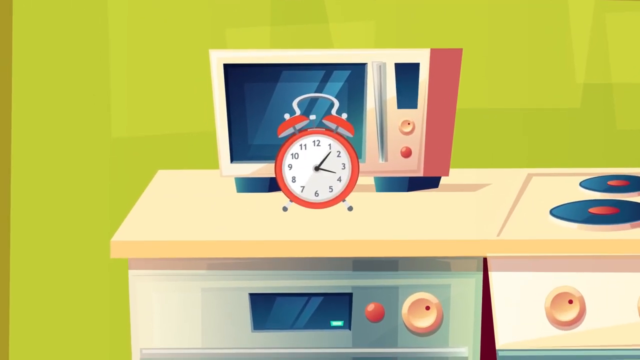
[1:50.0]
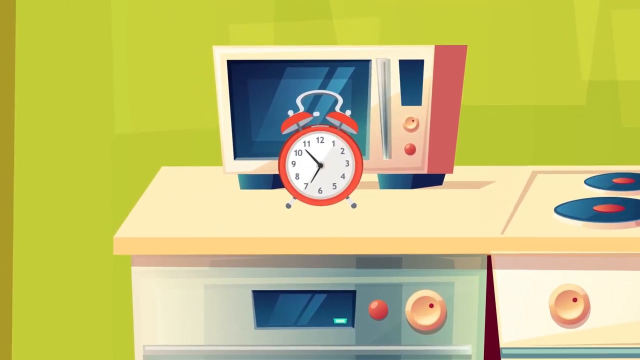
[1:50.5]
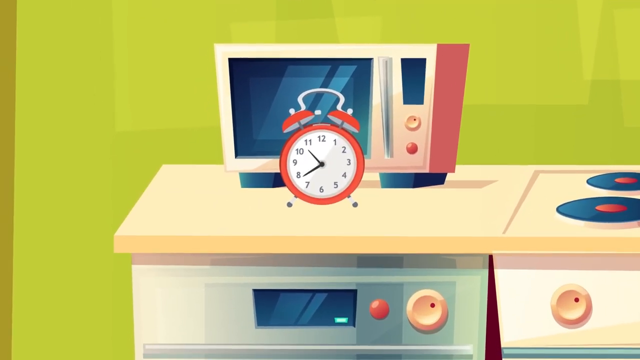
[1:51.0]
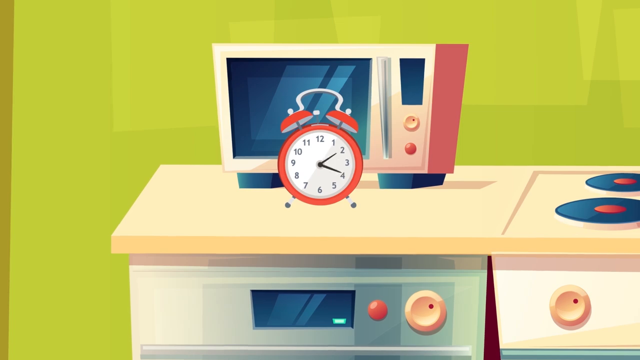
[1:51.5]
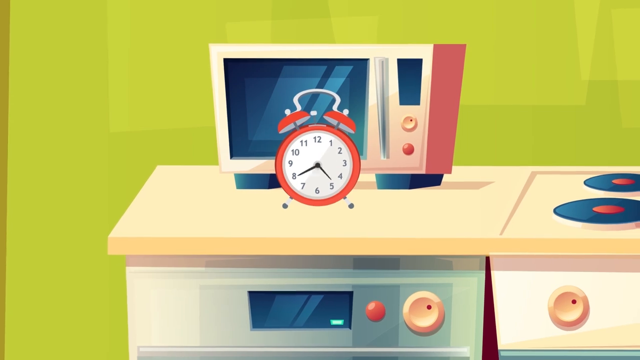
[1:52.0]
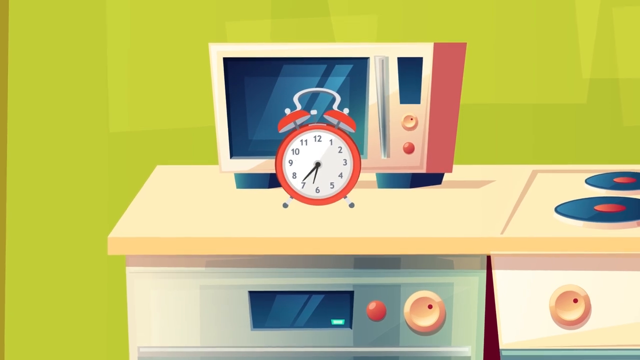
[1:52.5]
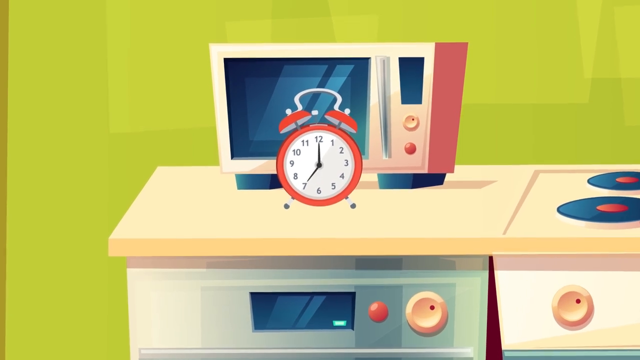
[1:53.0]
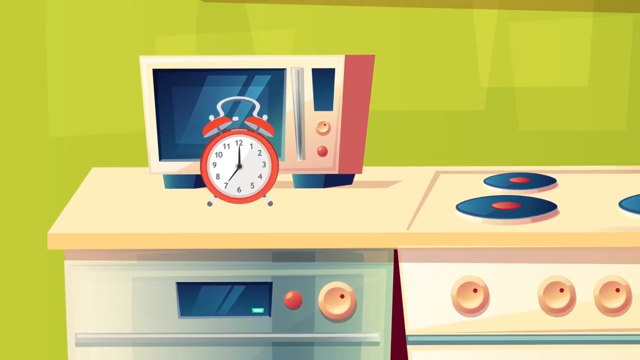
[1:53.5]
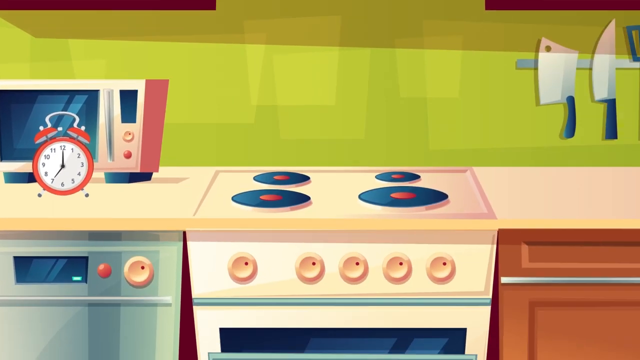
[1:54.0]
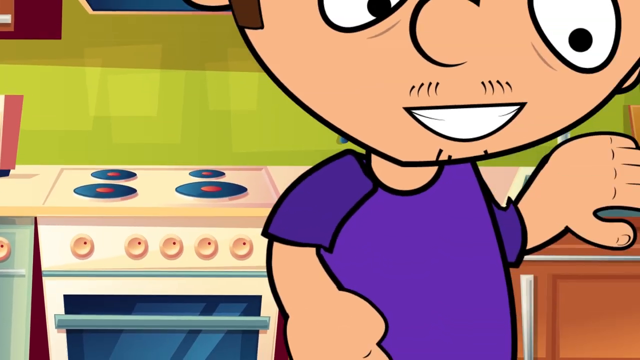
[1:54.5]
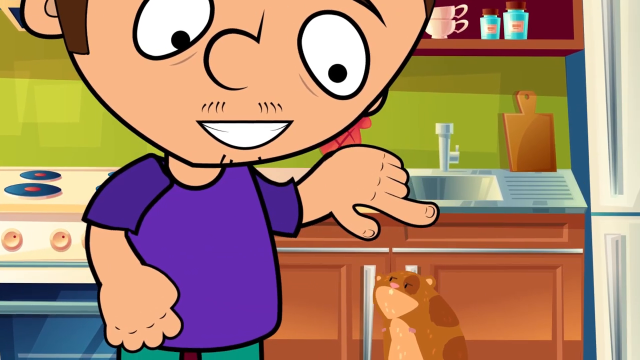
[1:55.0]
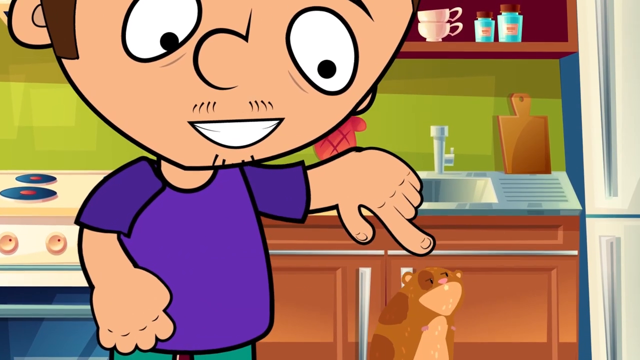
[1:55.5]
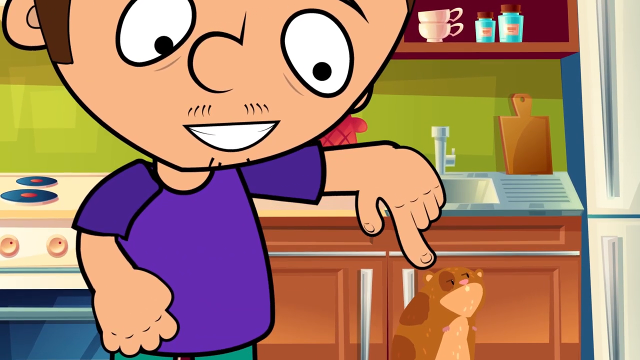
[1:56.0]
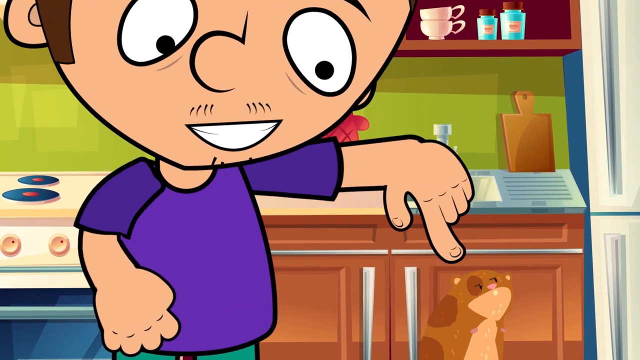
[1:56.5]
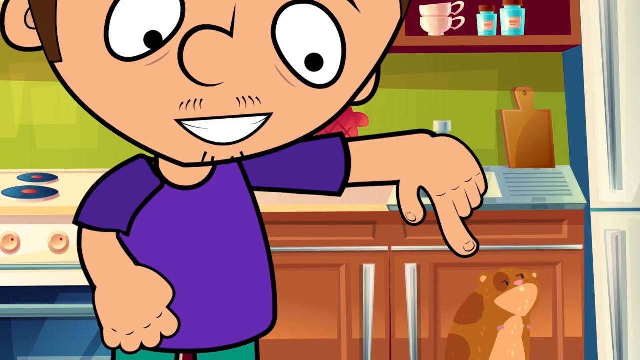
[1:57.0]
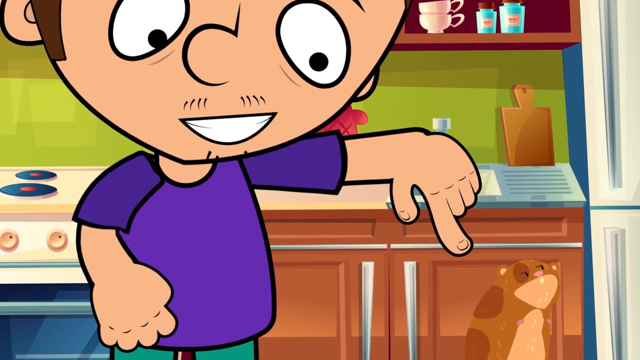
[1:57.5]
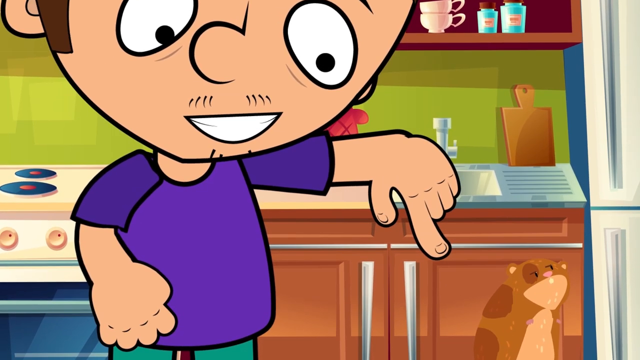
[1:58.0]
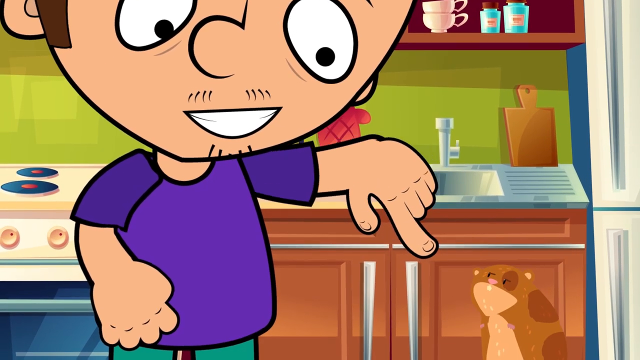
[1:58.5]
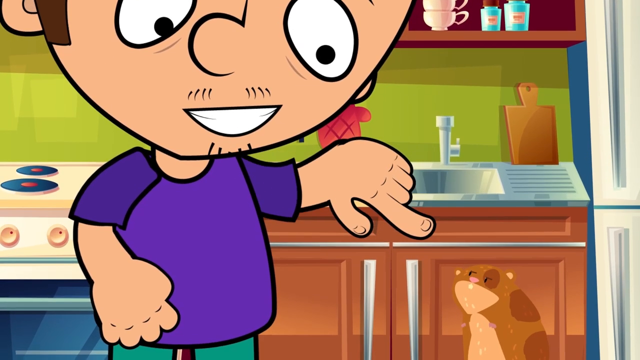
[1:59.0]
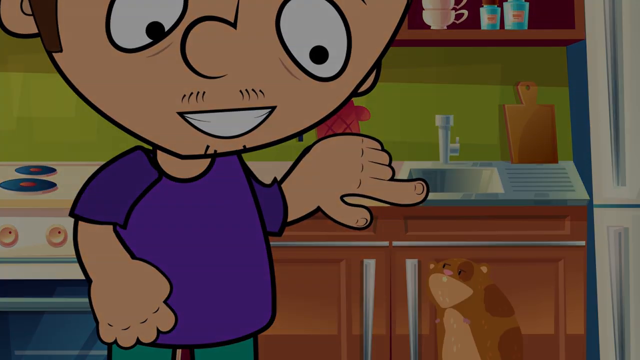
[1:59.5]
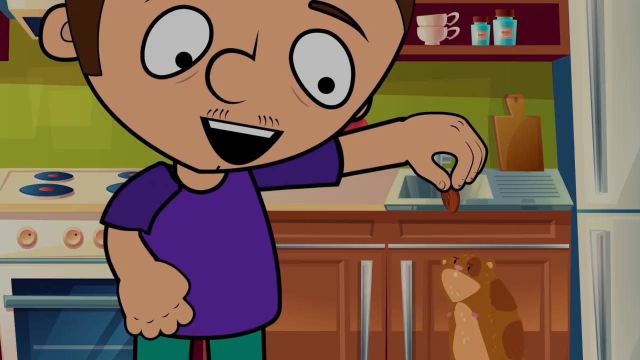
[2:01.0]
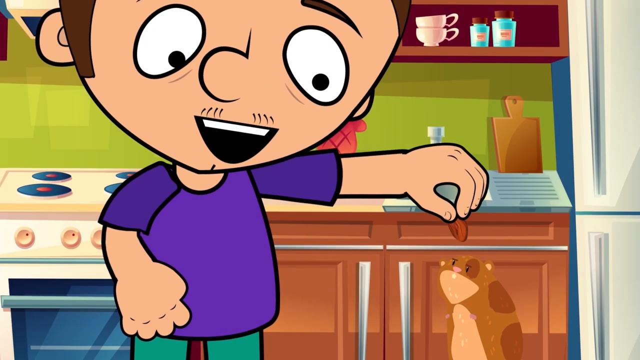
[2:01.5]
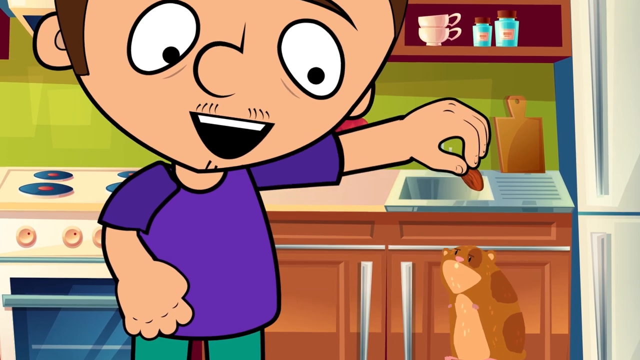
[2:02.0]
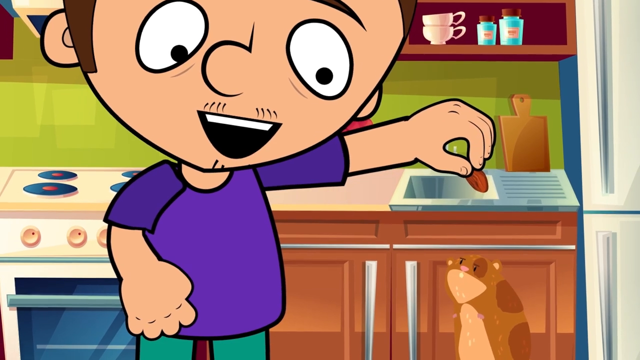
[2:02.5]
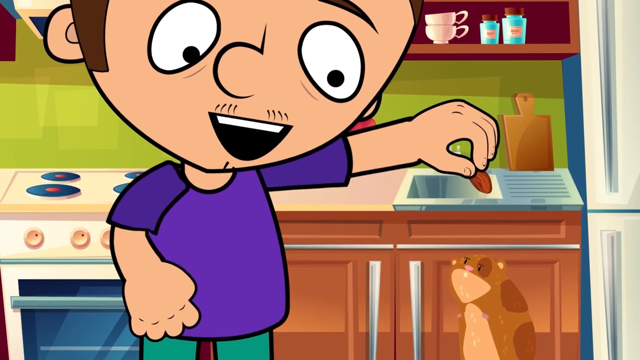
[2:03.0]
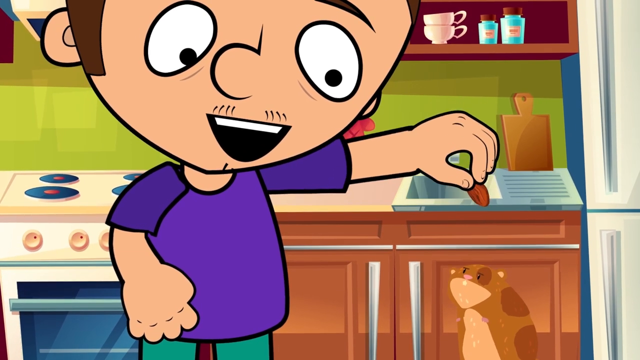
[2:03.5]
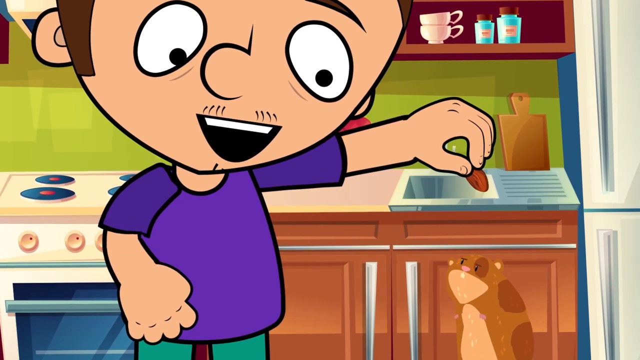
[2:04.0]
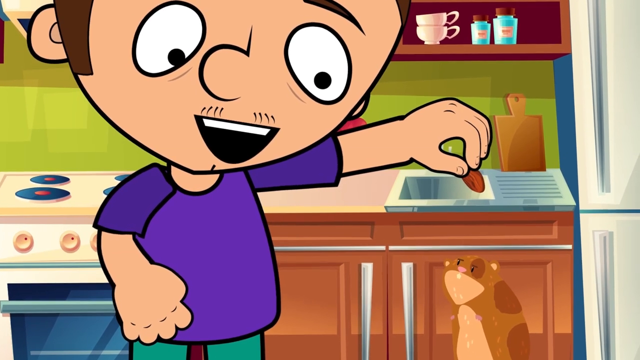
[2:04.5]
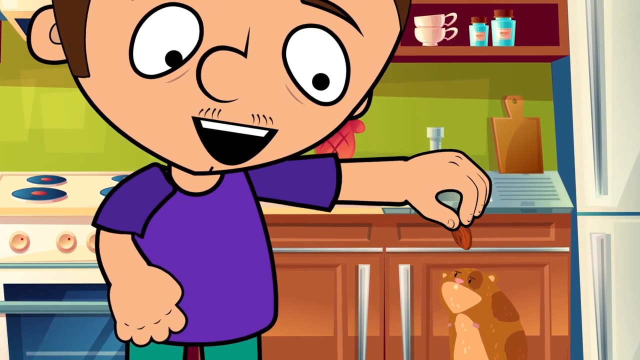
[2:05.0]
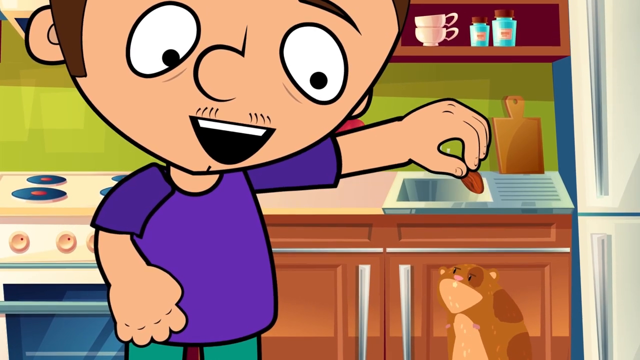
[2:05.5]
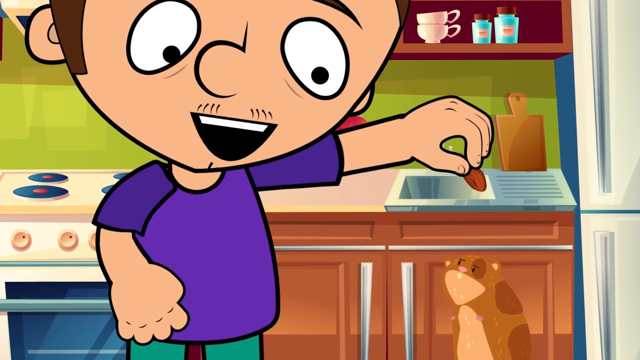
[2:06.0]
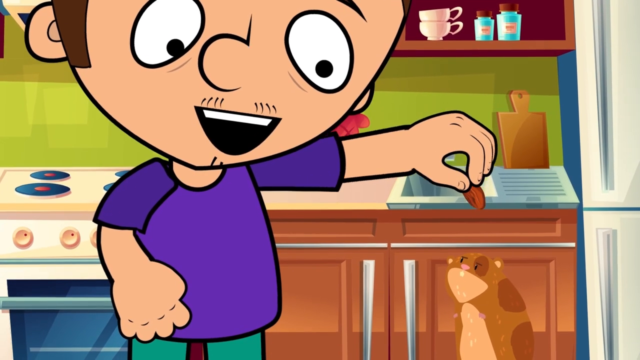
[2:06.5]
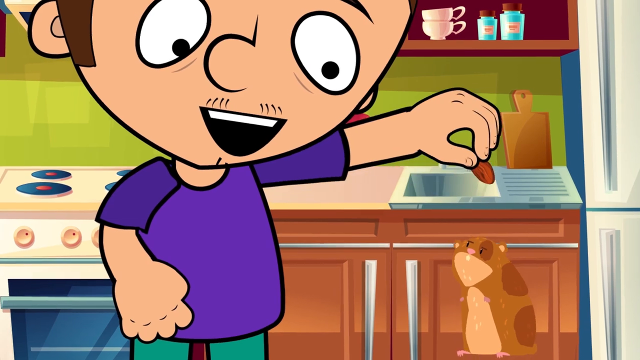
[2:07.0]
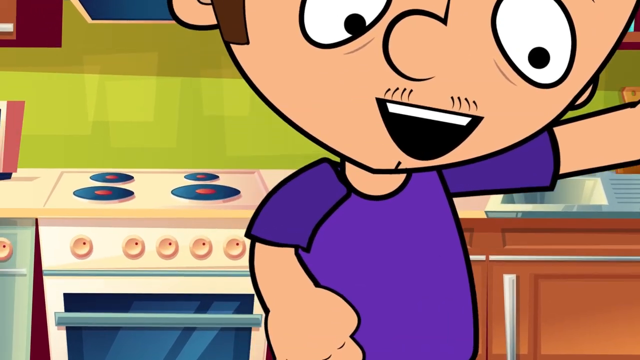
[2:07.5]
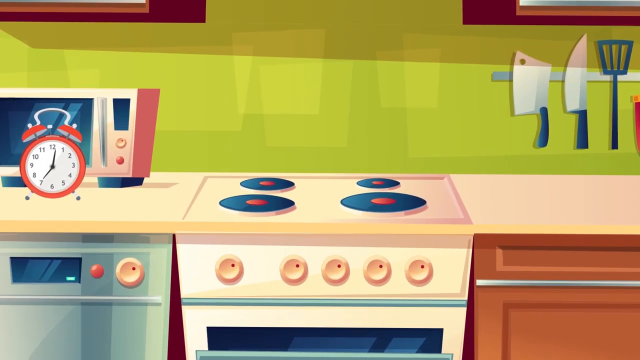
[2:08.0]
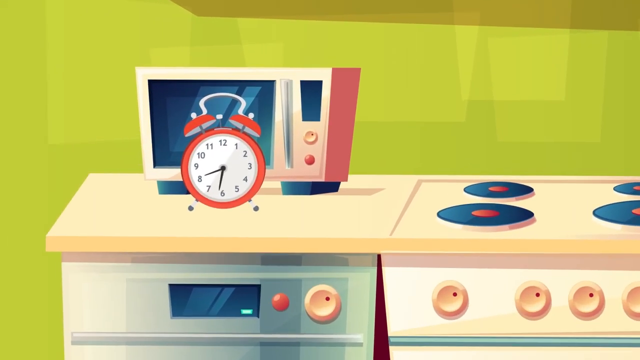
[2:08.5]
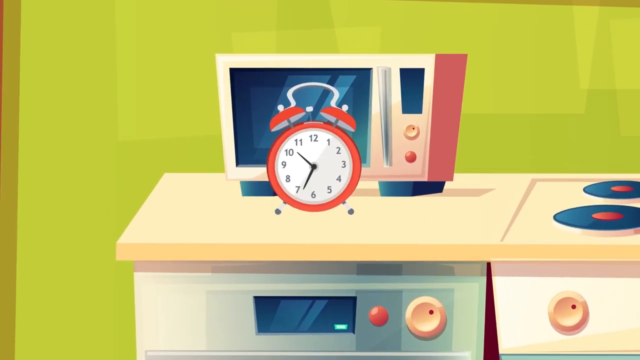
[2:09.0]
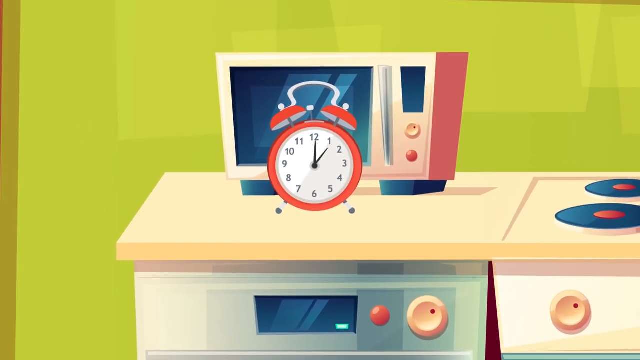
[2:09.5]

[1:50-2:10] The alarm clock spins wildly round and round, then stops at a time that appears to be 7:00. The male character points his left index finger toward the hamster, possibly trying to get it to follow his hand motions, and the hamster walks toward him. The man offers the hamster a nut, appearing to move it up and down near the hamster as if to teach it a trick. Each time he moves the nut closer, the hamster tries to jump toward it; this happens four times. The clock hands then move very fast again and finally stop somewhere around 4:06.